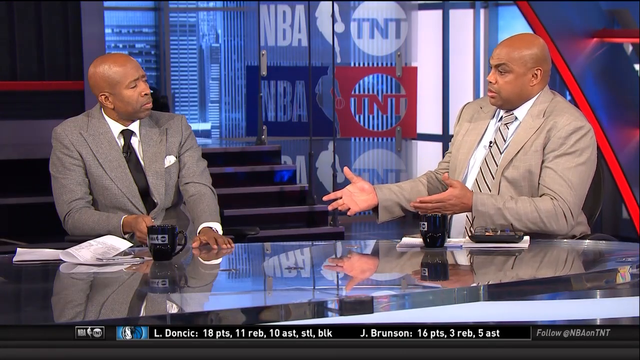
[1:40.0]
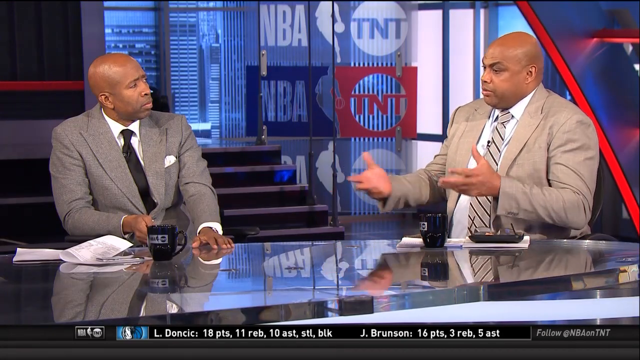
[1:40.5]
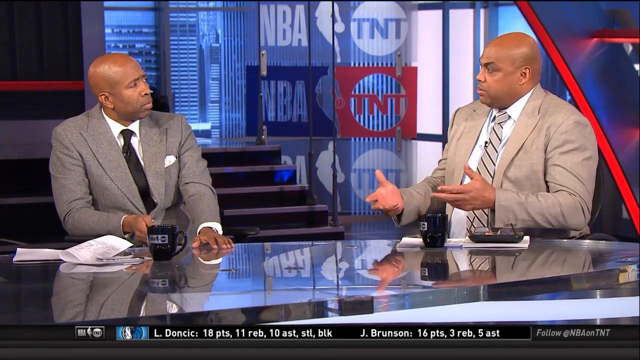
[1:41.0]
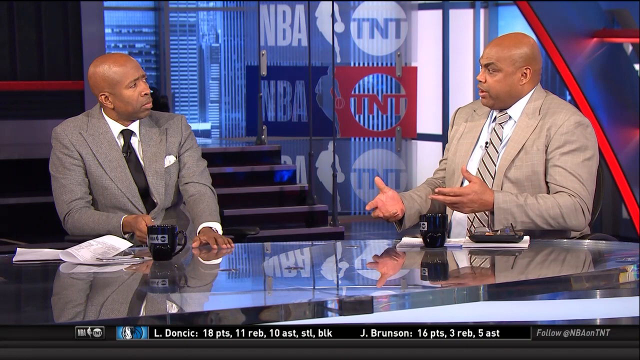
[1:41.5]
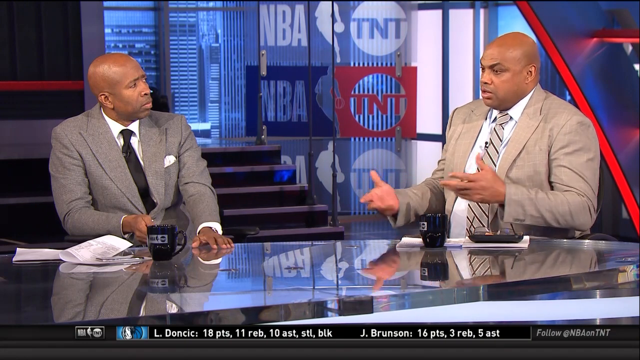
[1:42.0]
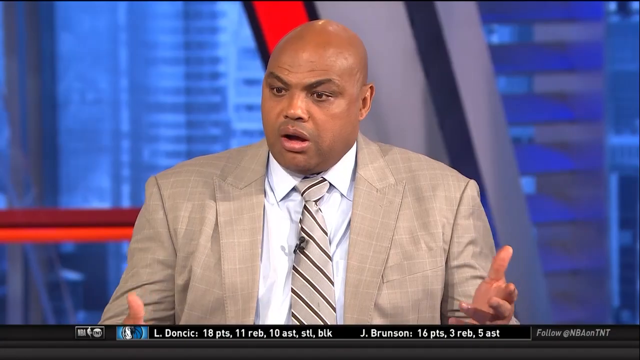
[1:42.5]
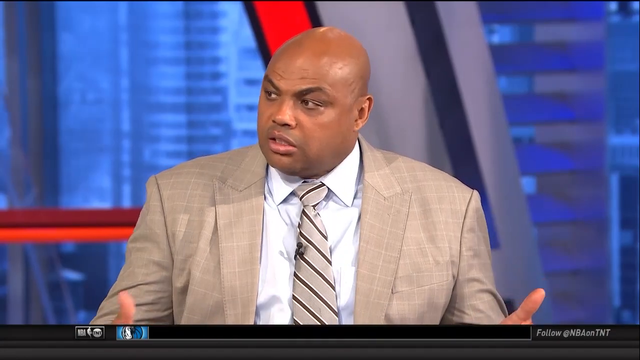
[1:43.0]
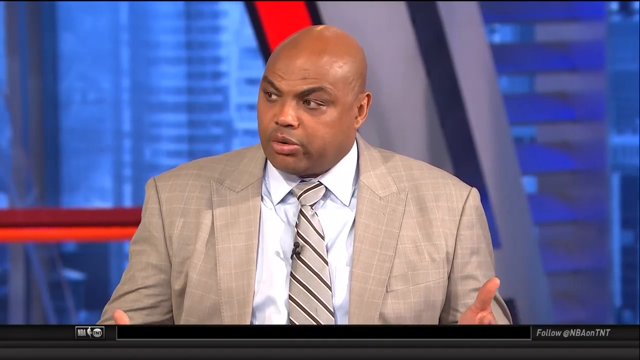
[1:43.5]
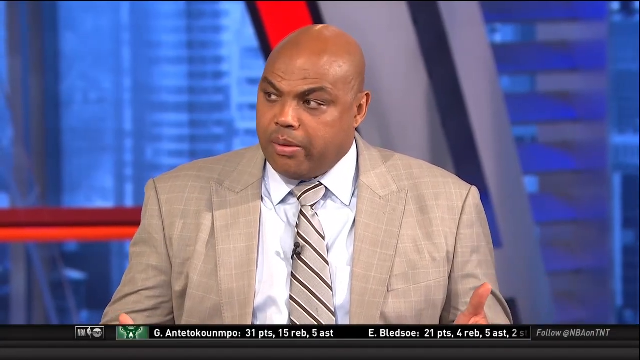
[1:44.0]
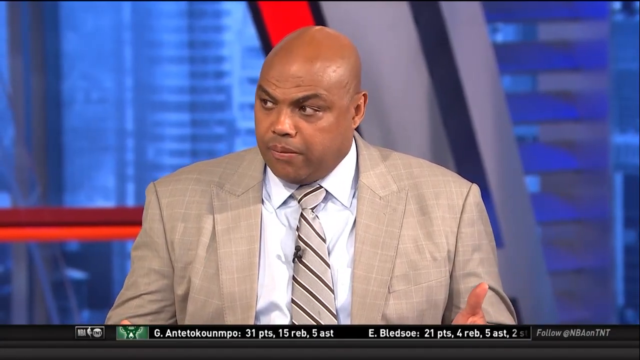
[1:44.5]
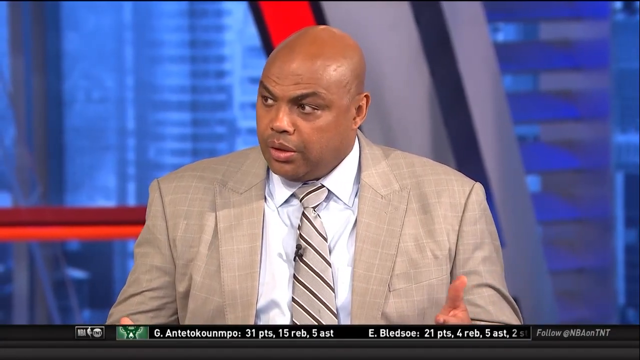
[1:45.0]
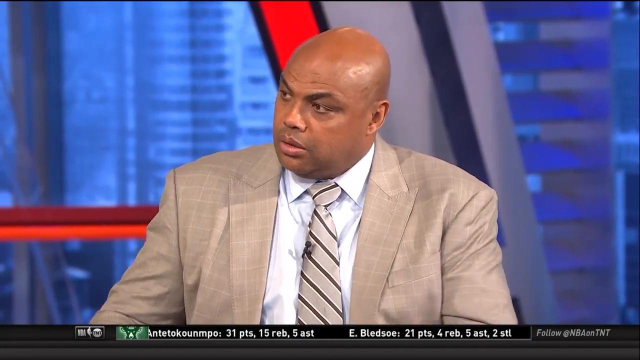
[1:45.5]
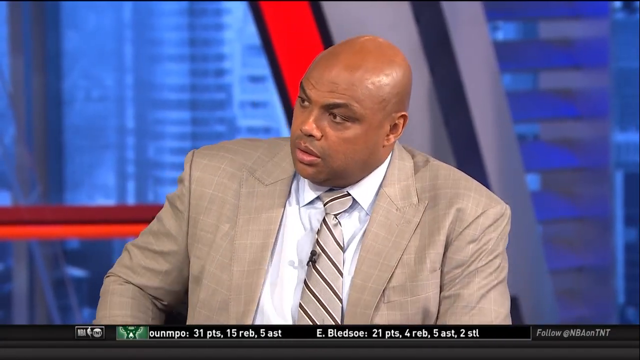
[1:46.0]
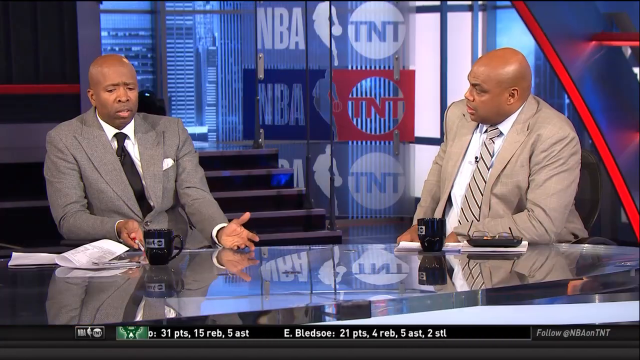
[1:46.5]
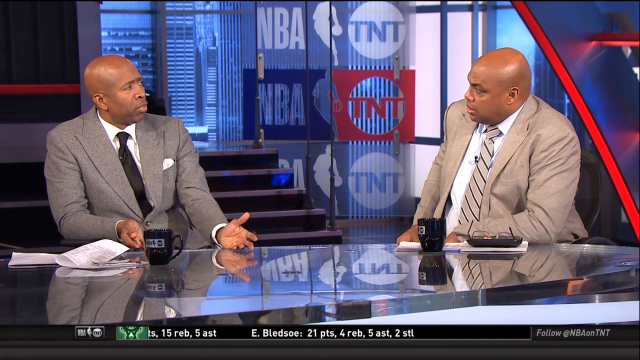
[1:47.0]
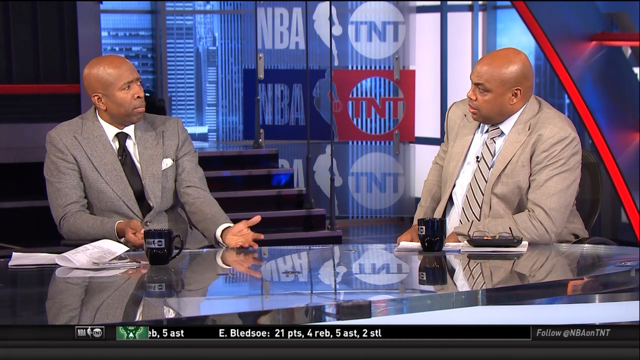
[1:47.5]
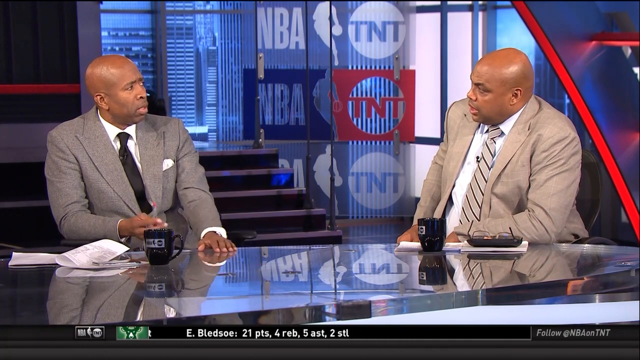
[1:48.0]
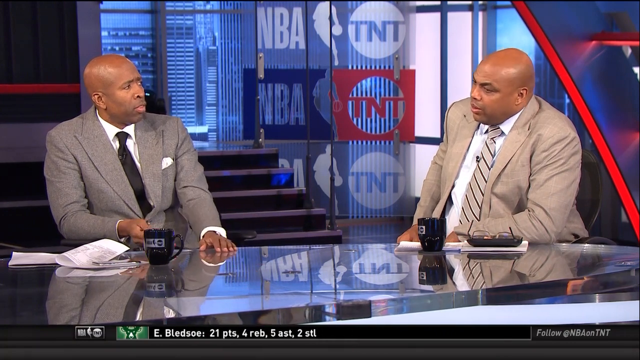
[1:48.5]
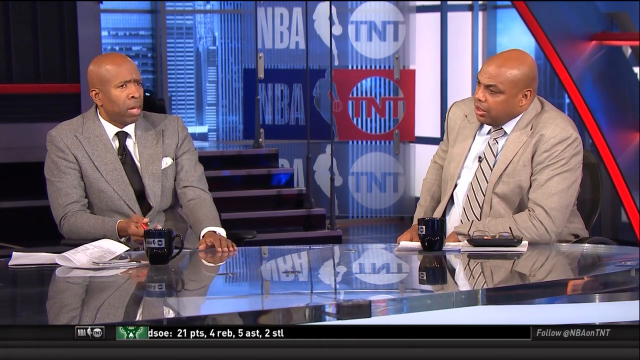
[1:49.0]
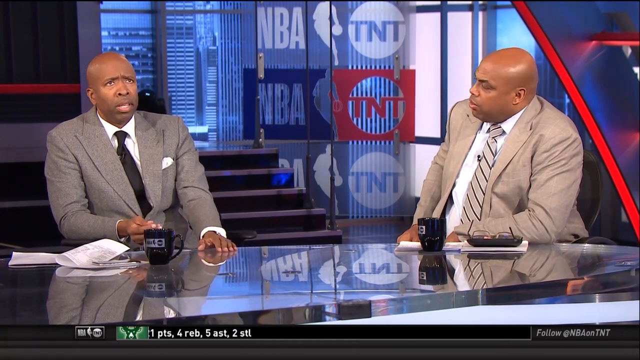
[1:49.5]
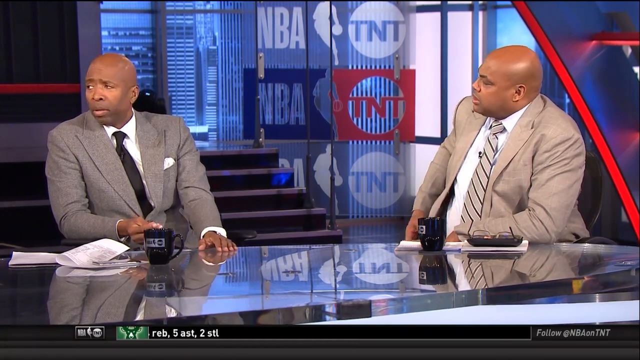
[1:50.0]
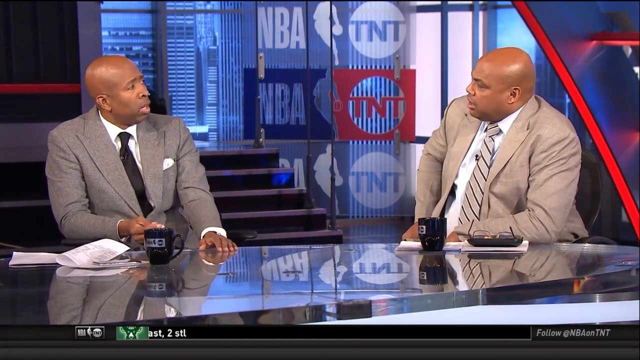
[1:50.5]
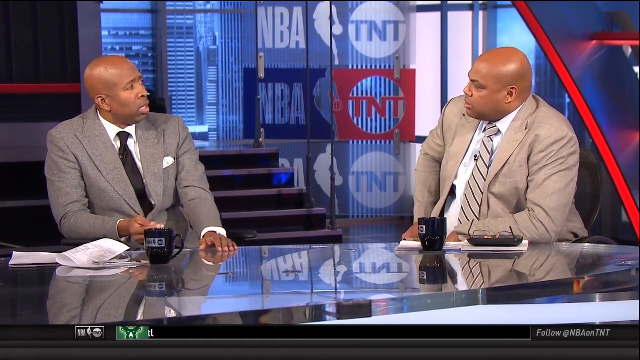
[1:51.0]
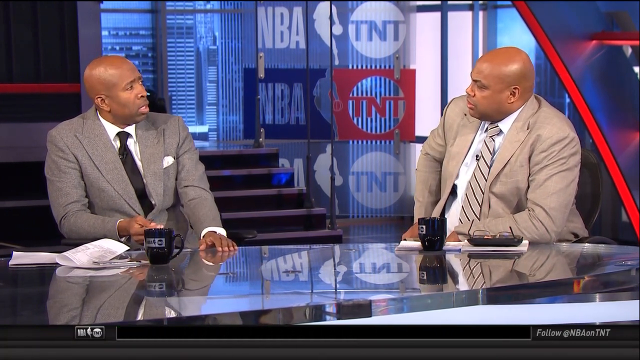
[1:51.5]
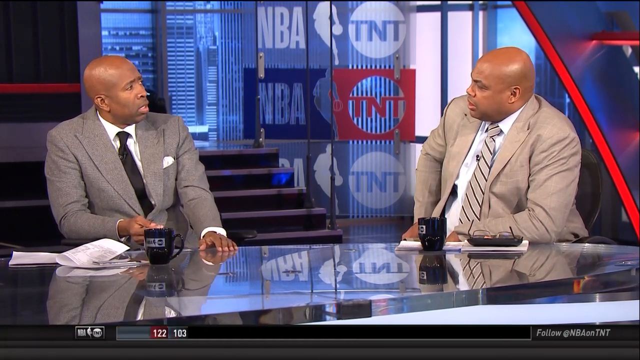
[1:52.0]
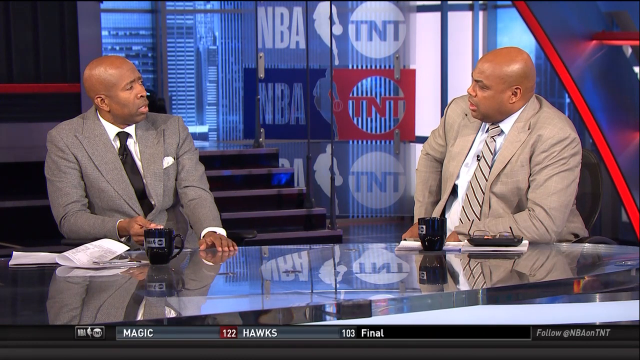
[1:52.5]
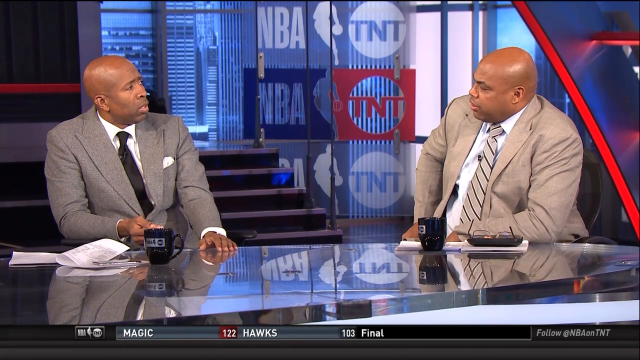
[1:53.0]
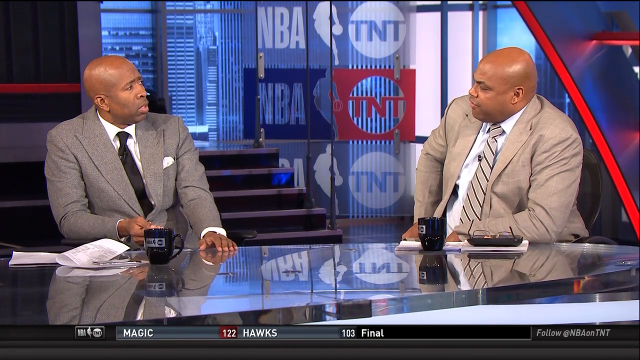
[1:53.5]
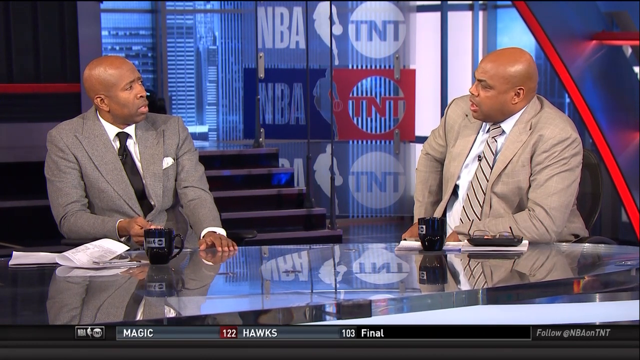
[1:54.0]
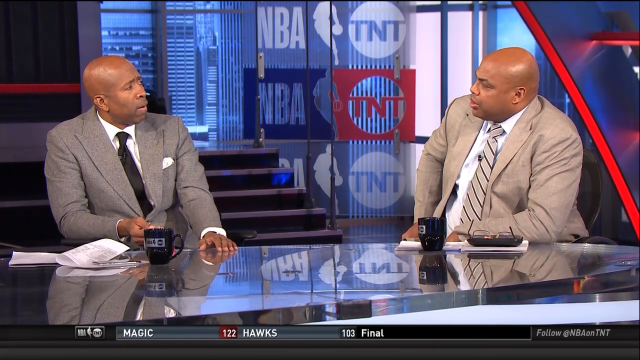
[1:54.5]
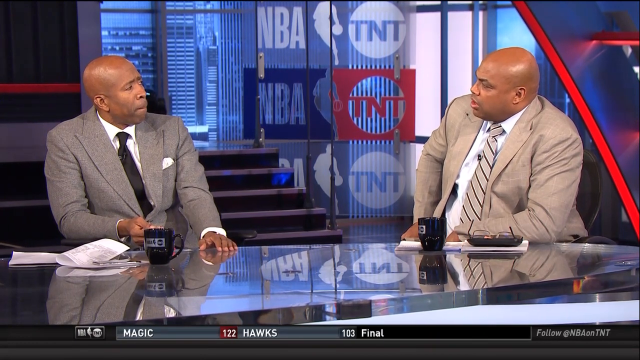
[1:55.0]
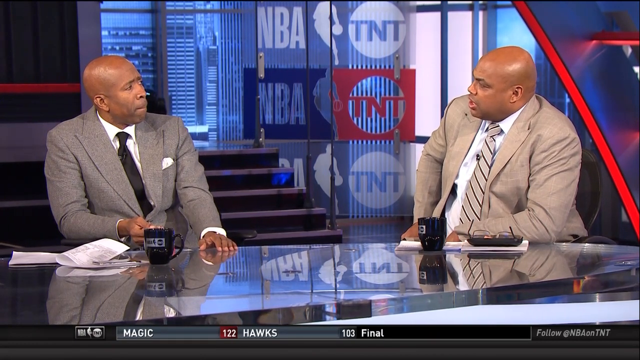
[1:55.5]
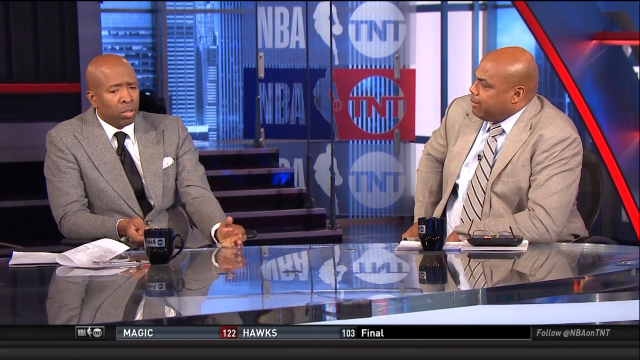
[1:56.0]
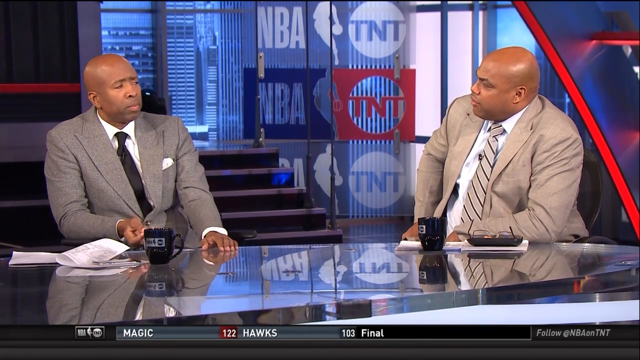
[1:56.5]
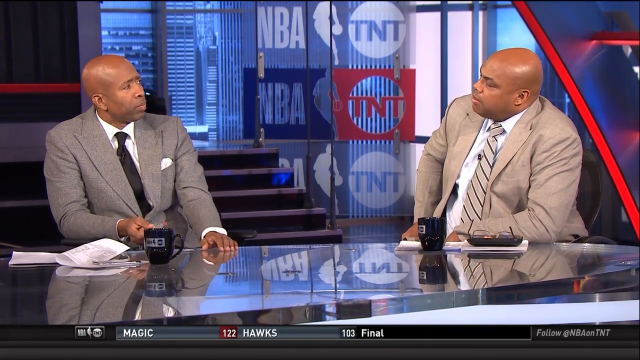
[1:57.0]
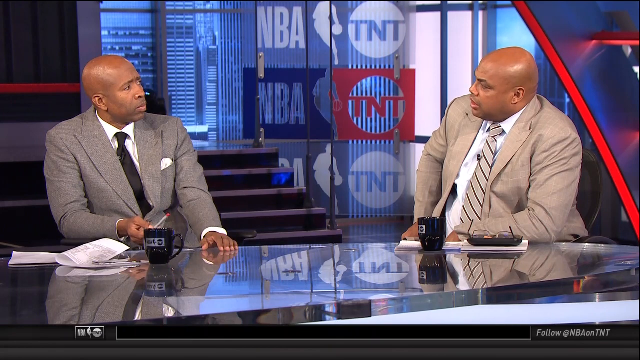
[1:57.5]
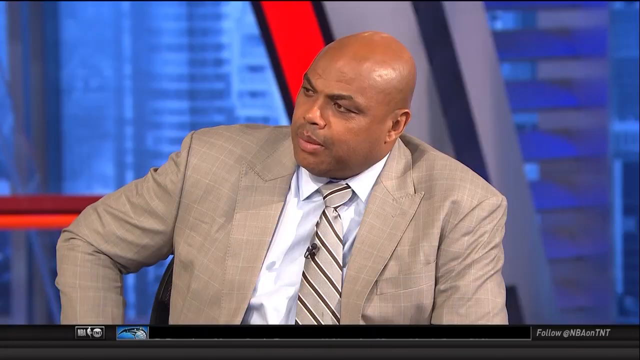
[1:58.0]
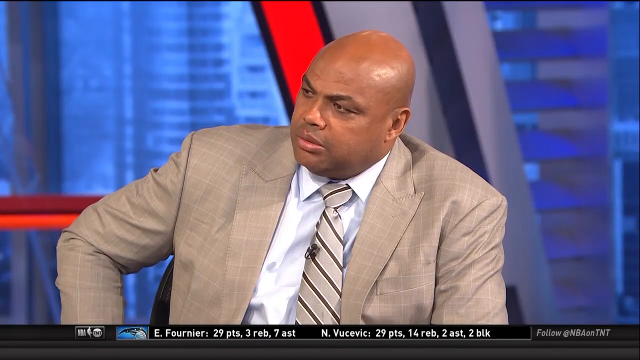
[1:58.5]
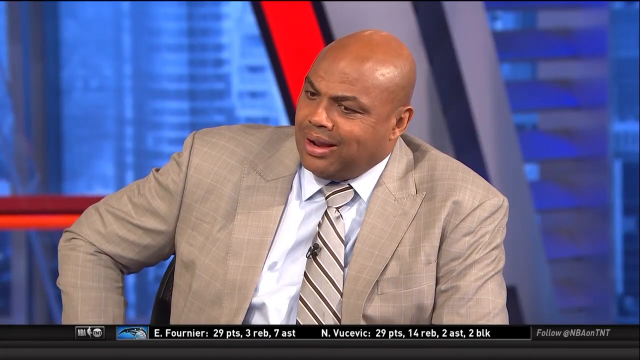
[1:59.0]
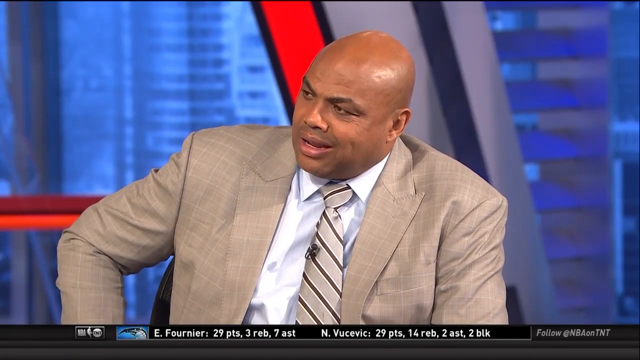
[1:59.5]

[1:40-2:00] A big black desk is very shiny on top. Sitting on the left side of the screen is a black man in a gray suit, white shirt and black tie with a white handkerchief in his front pocket. He keeps looking to his left, where a man sits on the right side of the screen: a black man in a white button-up shirt, a brown and tan striped tie and a tan suit. Black coffee cups are in front of both of them. The camera then cuts to just the black man in the tan suit, white shirt and tan and black striped tie, speaking and looking to his right where the other man is sitting. Behind him is a small staircase with only five stairs, and up on the wall it reads "nba tnt."